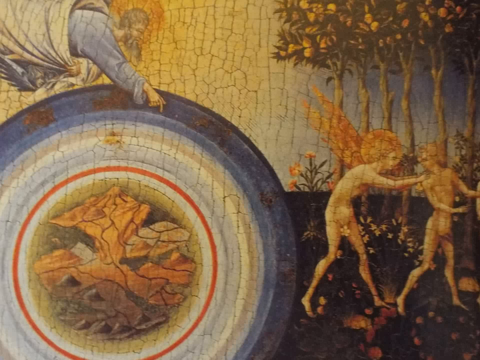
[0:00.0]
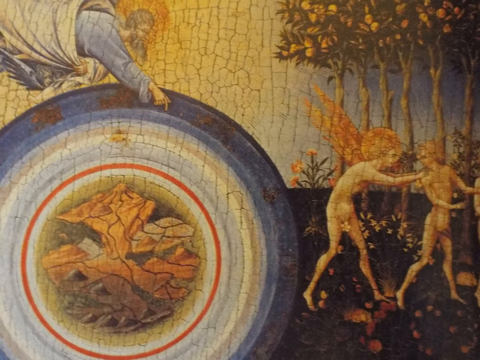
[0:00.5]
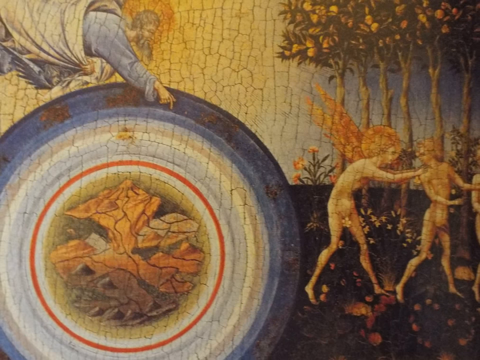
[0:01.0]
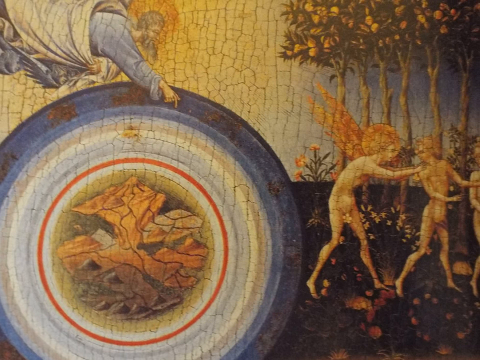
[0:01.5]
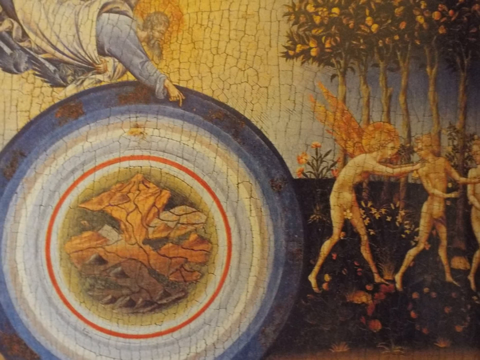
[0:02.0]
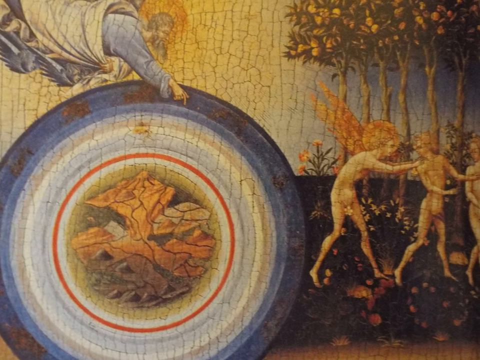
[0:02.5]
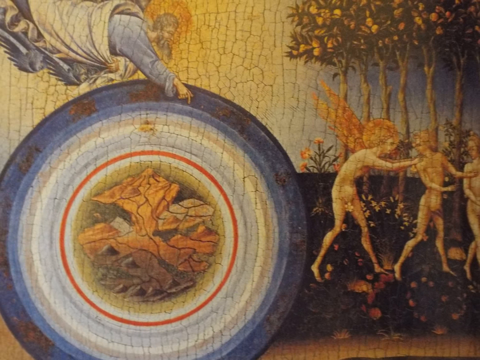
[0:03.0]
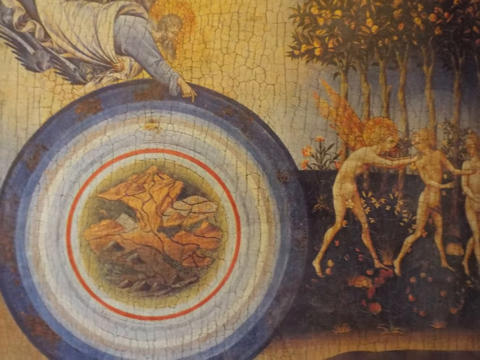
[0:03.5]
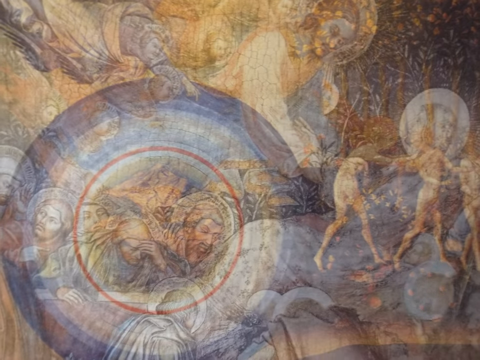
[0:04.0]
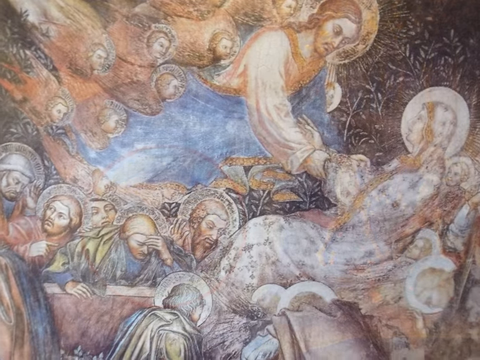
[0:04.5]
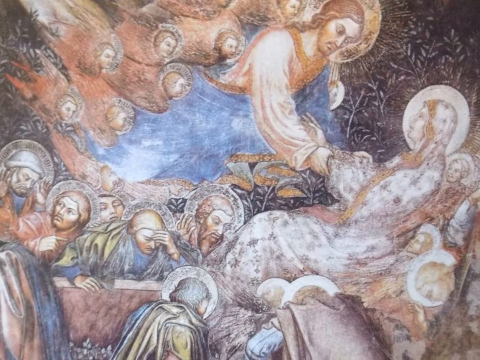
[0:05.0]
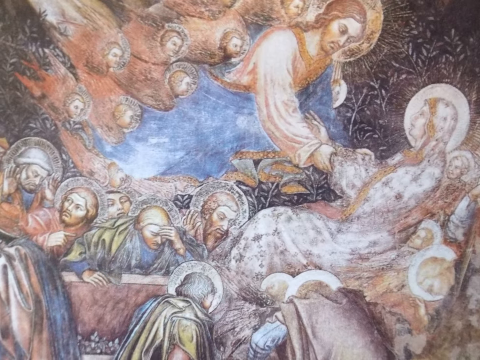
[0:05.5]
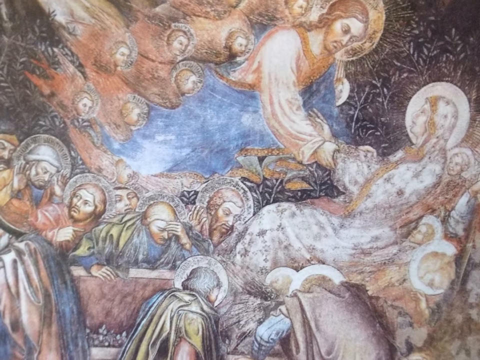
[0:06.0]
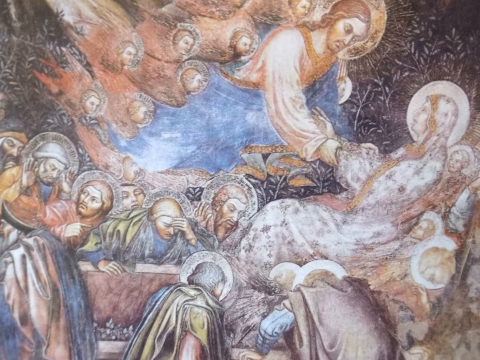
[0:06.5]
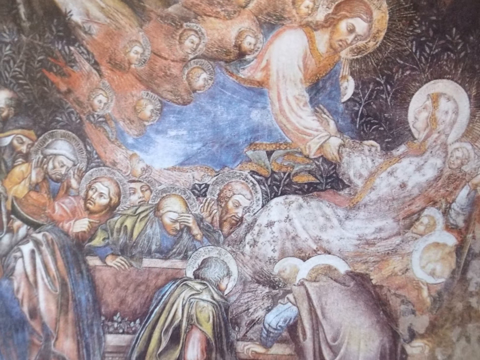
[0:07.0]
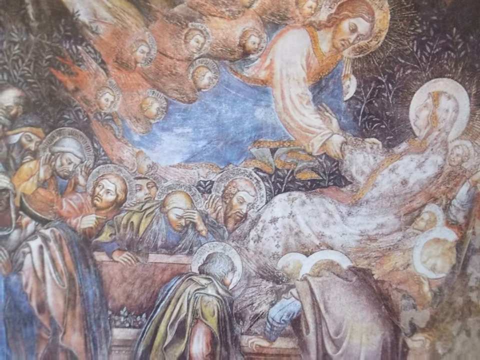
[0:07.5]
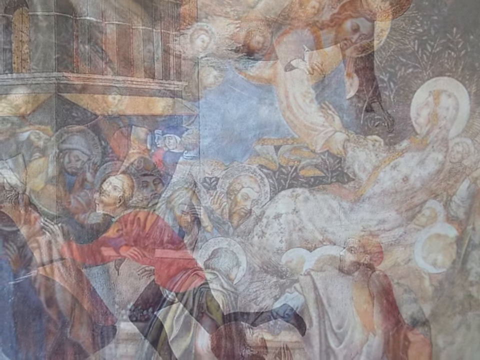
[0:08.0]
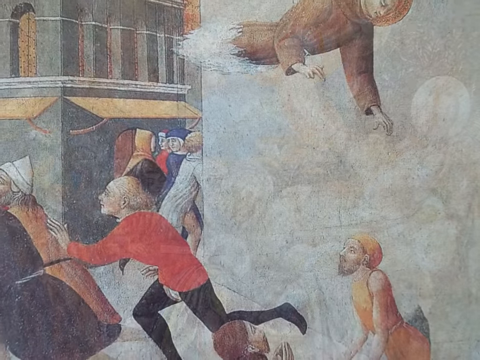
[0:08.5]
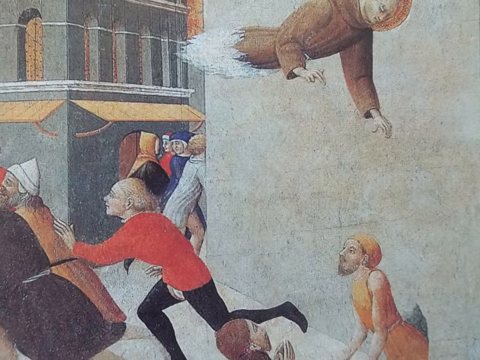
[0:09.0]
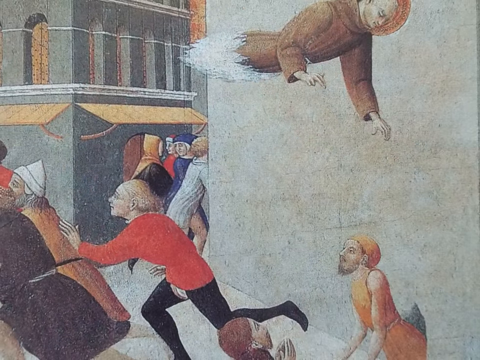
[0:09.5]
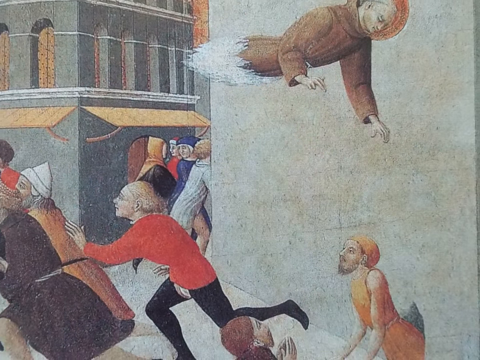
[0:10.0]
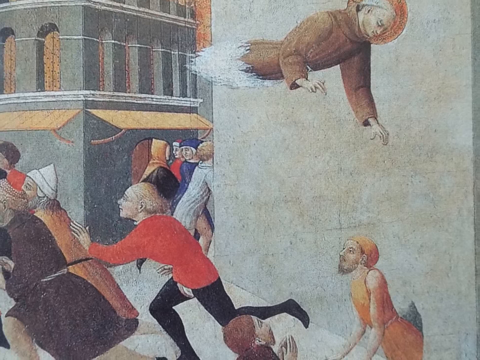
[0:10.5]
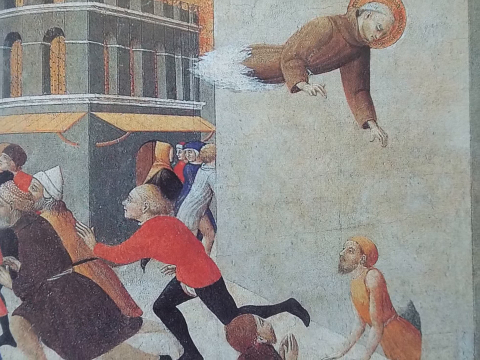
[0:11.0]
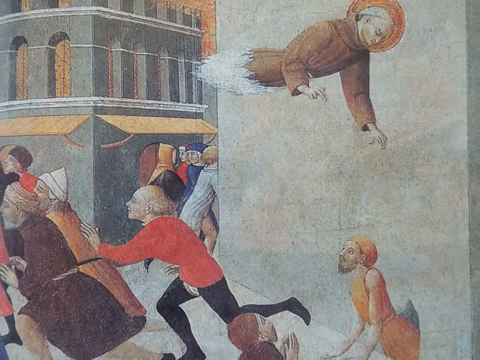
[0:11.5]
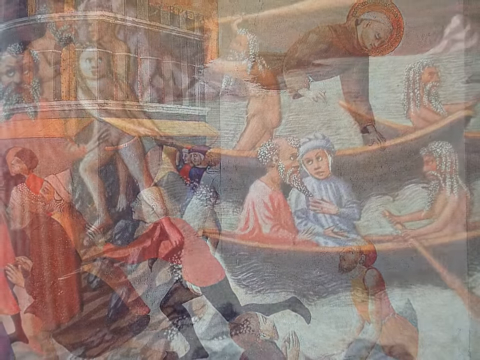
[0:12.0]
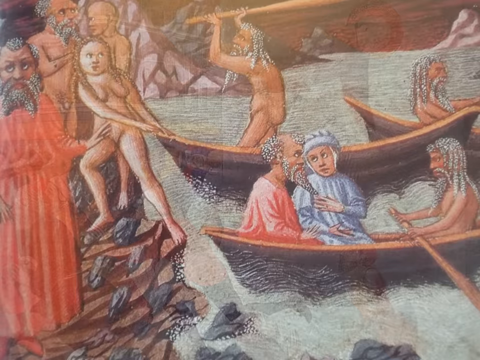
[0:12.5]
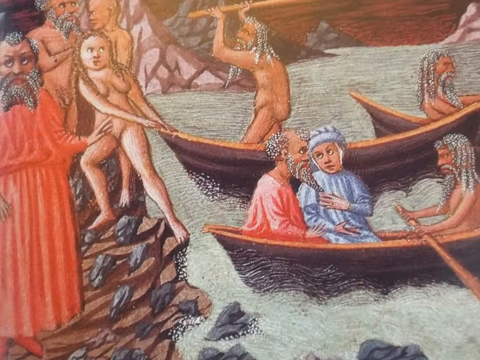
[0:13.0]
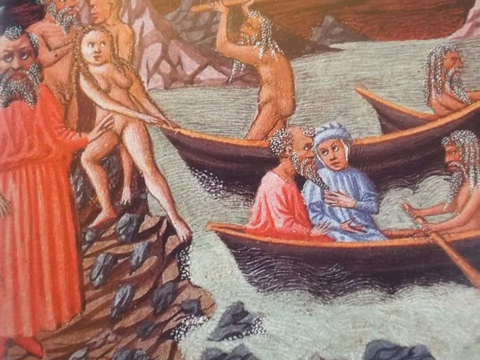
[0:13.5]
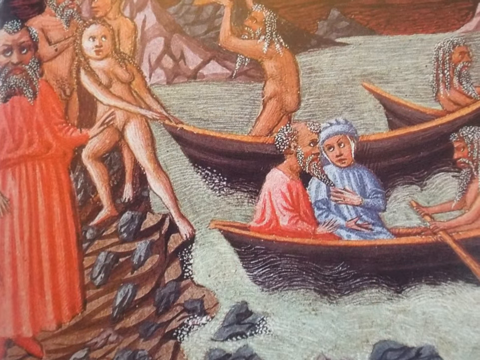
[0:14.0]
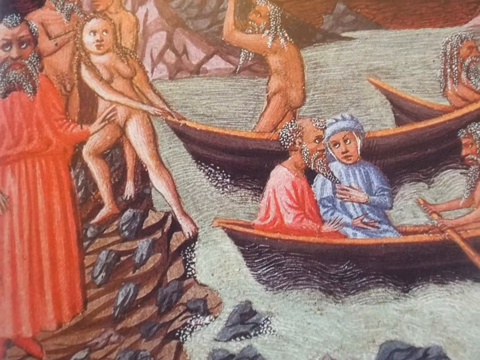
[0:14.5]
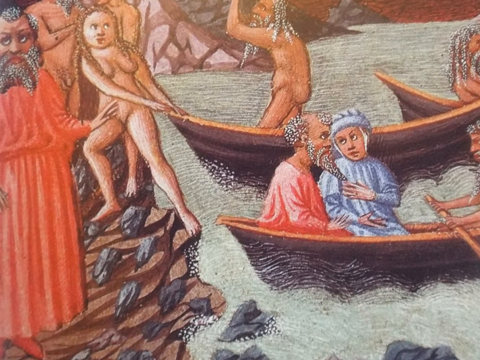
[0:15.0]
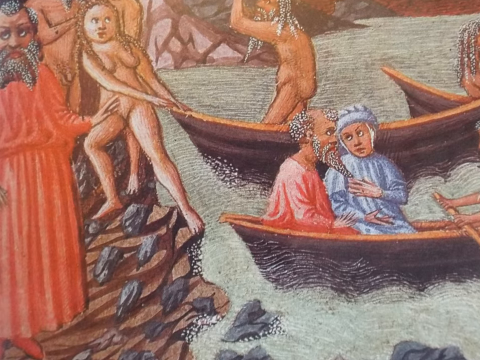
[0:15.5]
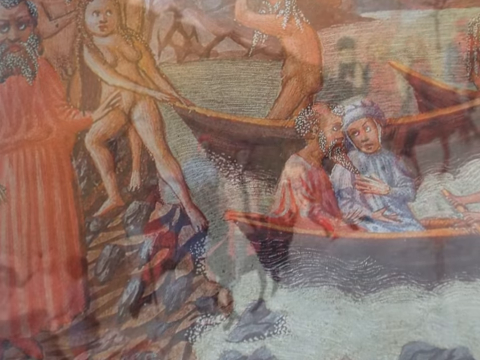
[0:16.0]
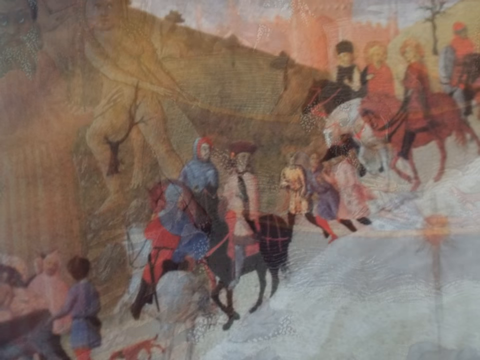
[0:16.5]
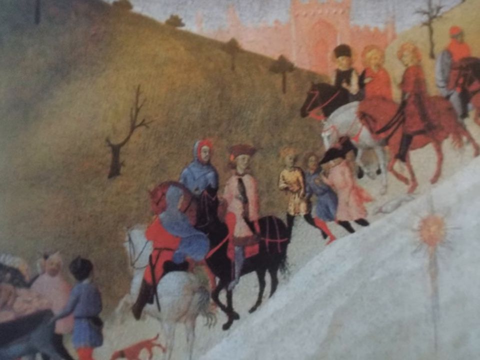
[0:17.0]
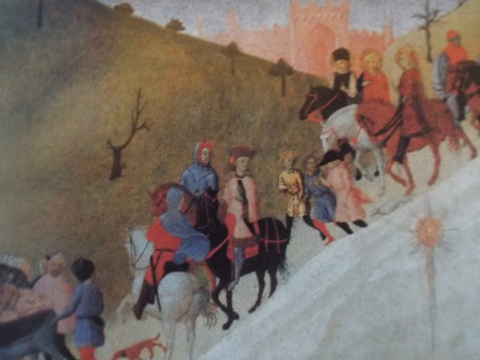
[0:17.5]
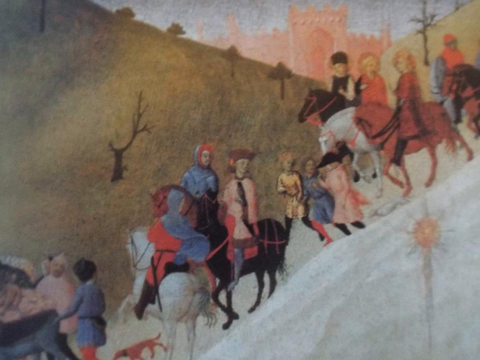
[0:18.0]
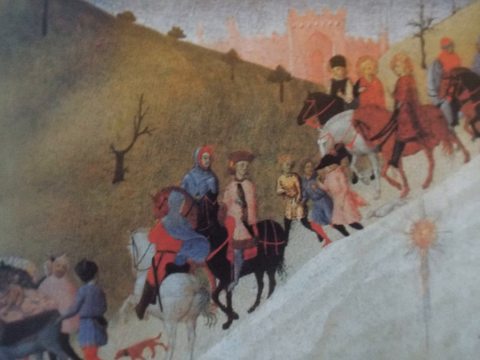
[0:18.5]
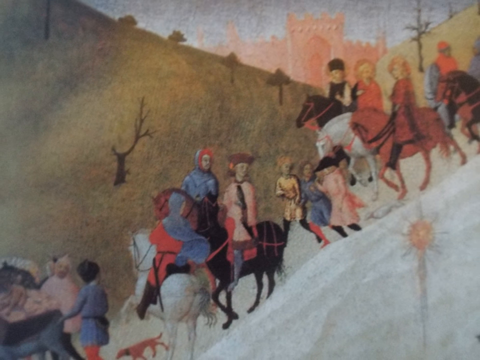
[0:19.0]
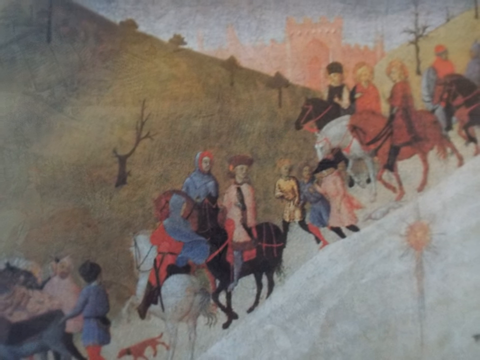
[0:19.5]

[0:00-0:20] An old painting with many cracks in it appears to show two almost angelic figures with halos around their faces. Two figures are naked, and an angel floats at the top, pointing down. There is a big circle made of many different colored layers with some type of orange flame in the middle, and the figures are in something like a garden. As the view pulls away, another naked person is visible standing next to the two. Next comes a picture that looks like Jesus coming in the air with other angels behind him; he holds the hand of Mary, who has a halo around her. It looks blended with a picture of the last disciple at the bottom, with all the apostles having halos around them. The colors are somewhat muted, not very bright. The imagery then shifts to a kind of realist style with flat colors but some bold red and blue. A monk in the air faces down, looking at somebody; the bottom half of him is almost like a jet. White is visible in the back, and he has a halo around him. People run from a building, most of them wearing either hoods or a hat of some sort. Next is a painting of people on a boat, some of them clothed. A man with a long beard is in a boat, and a naked girl is trying to pull the boat in. Then there is a picture of dressed-up people who look European, like from the 1600s; most of them, adults and children, are on horses, traversing something like a hill.